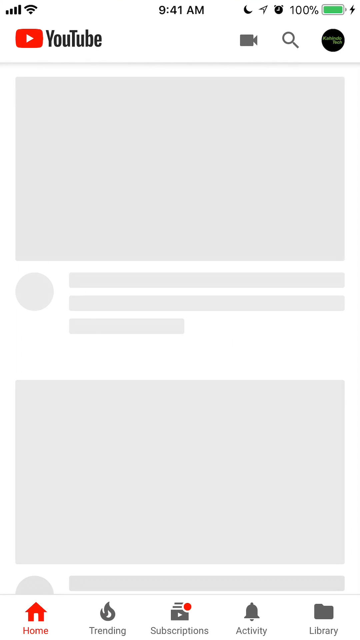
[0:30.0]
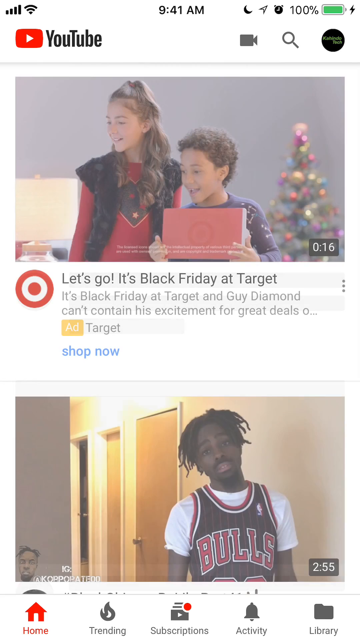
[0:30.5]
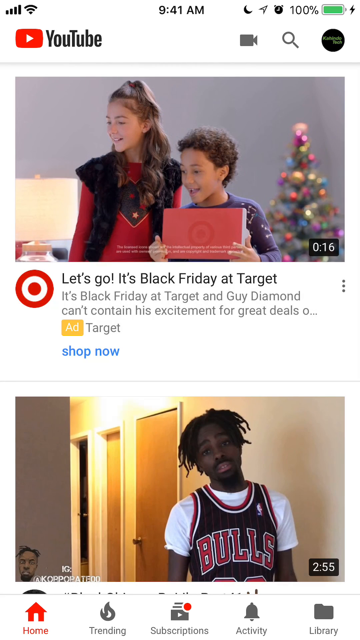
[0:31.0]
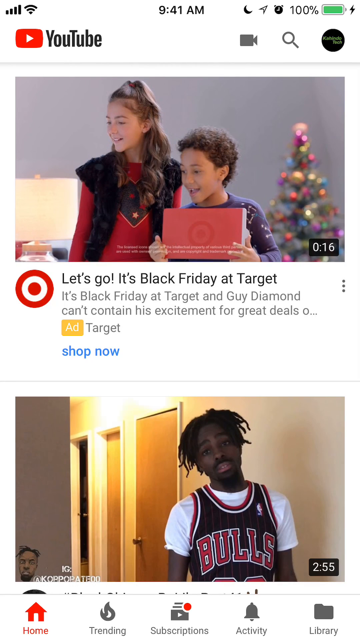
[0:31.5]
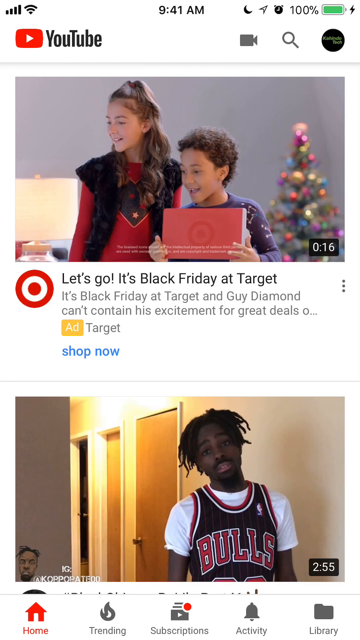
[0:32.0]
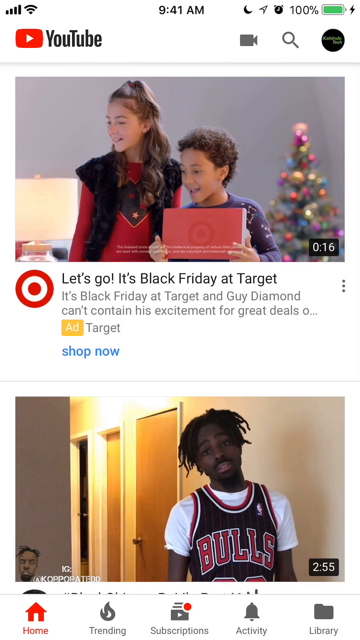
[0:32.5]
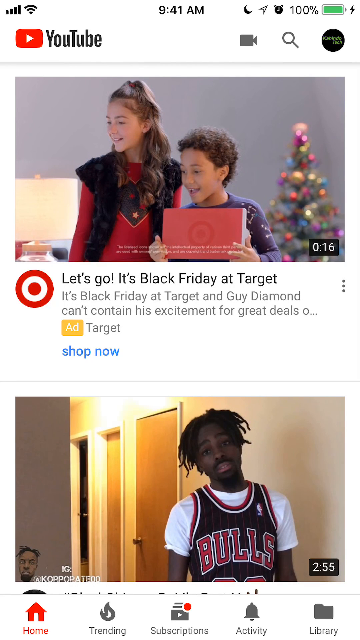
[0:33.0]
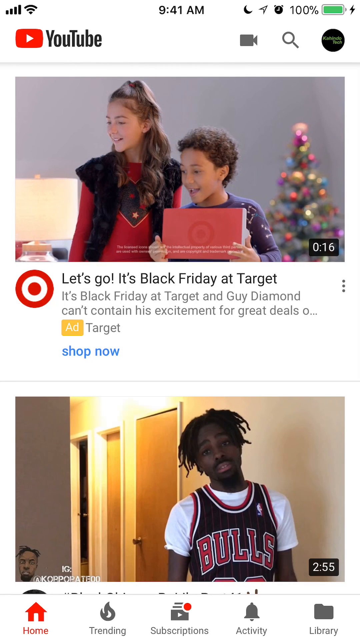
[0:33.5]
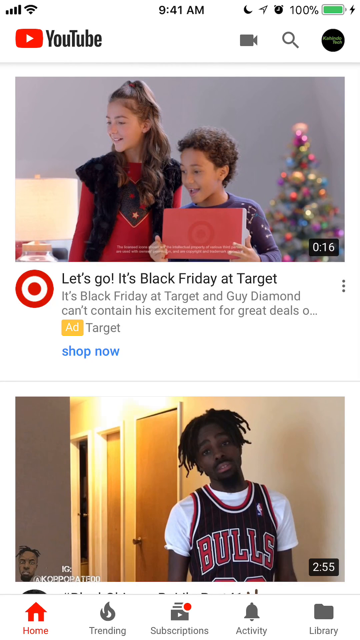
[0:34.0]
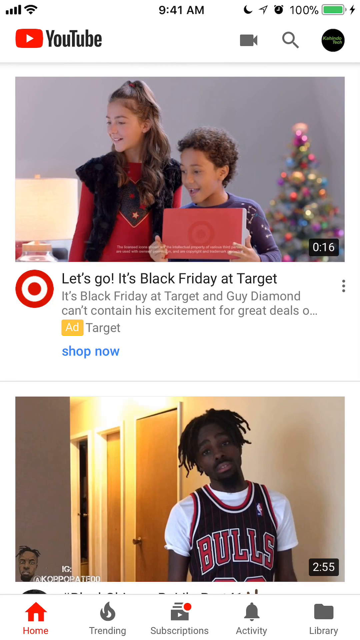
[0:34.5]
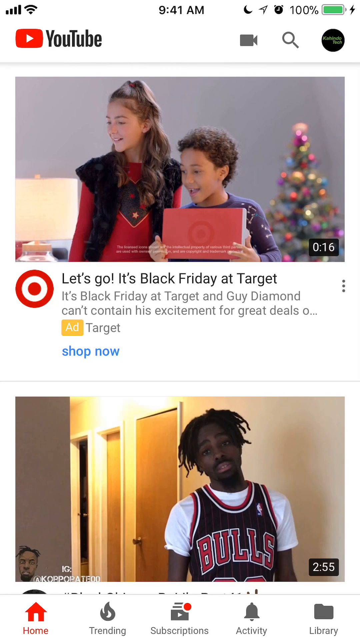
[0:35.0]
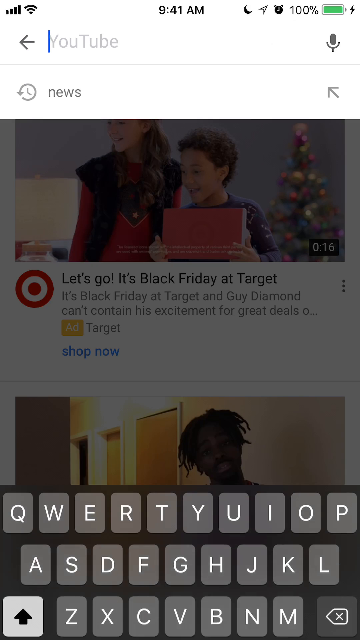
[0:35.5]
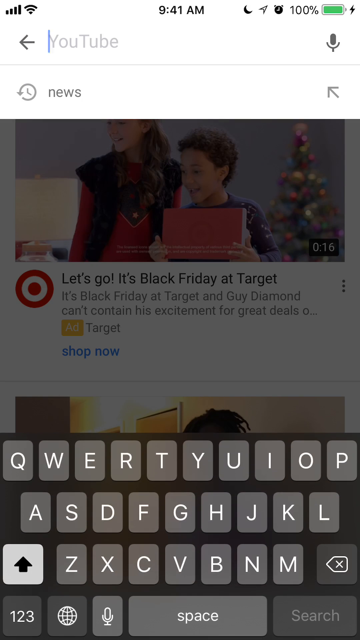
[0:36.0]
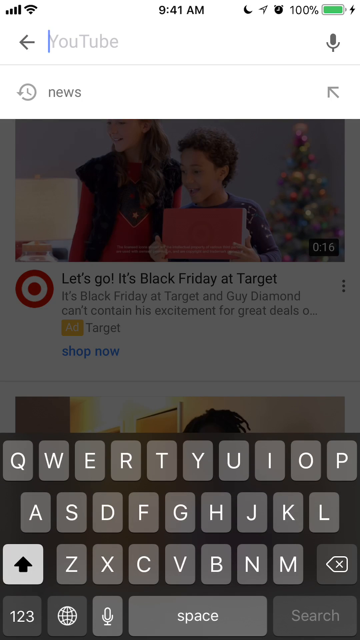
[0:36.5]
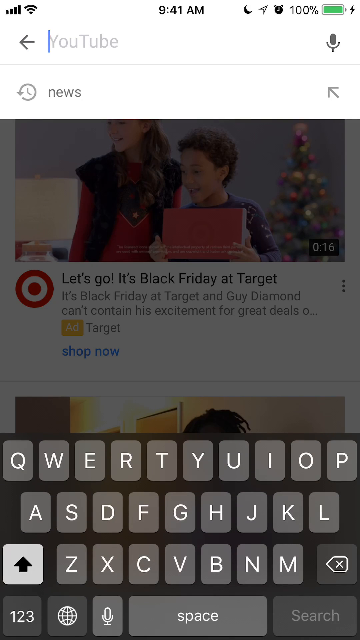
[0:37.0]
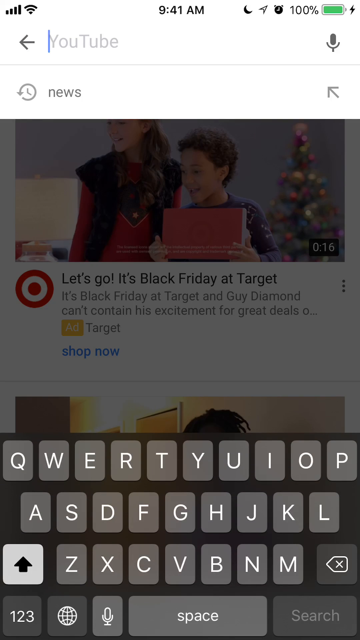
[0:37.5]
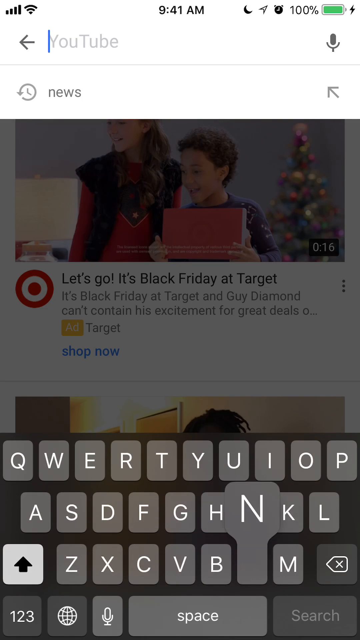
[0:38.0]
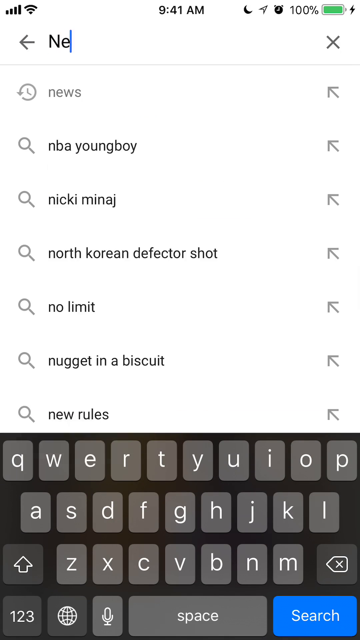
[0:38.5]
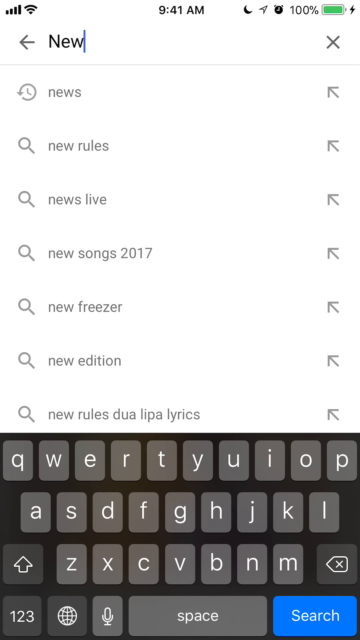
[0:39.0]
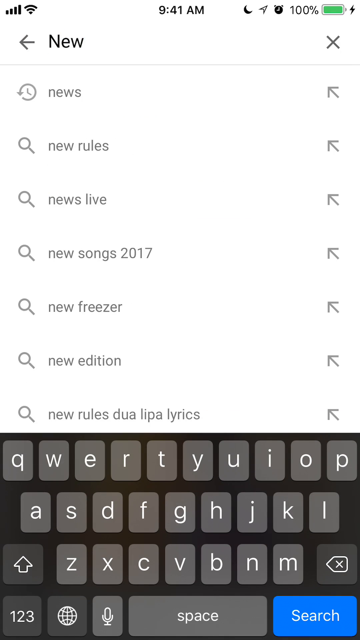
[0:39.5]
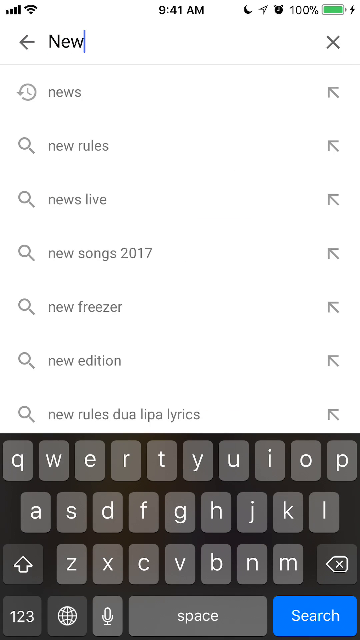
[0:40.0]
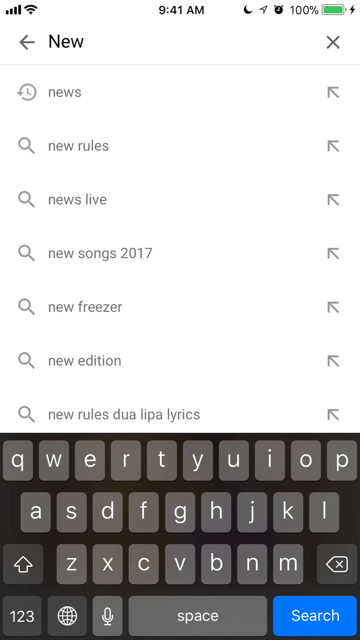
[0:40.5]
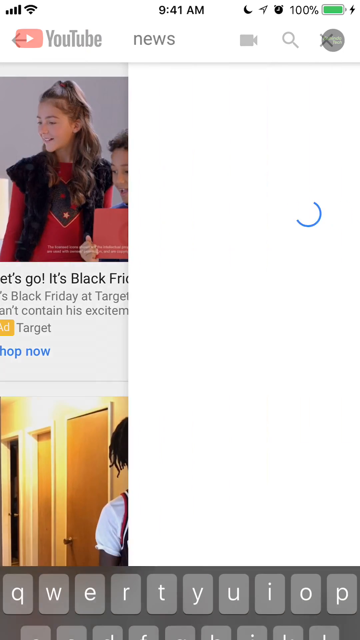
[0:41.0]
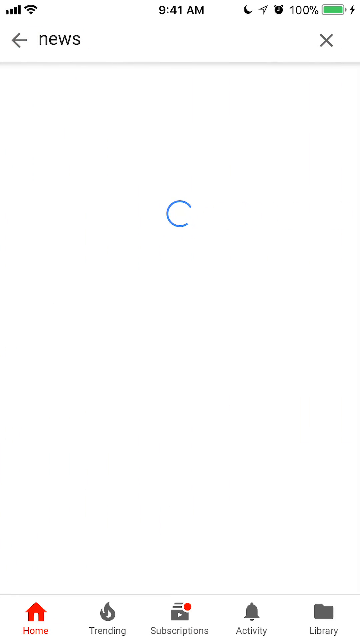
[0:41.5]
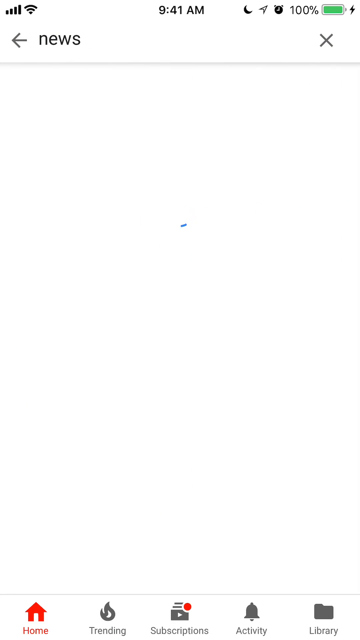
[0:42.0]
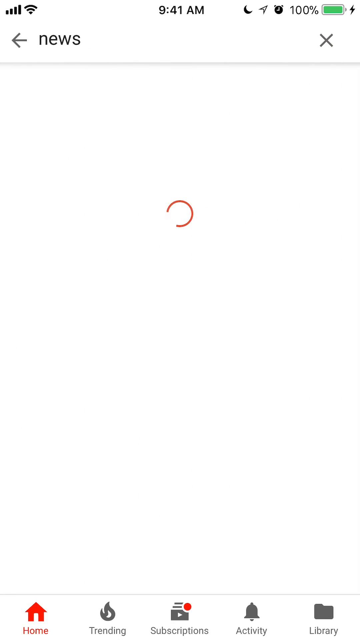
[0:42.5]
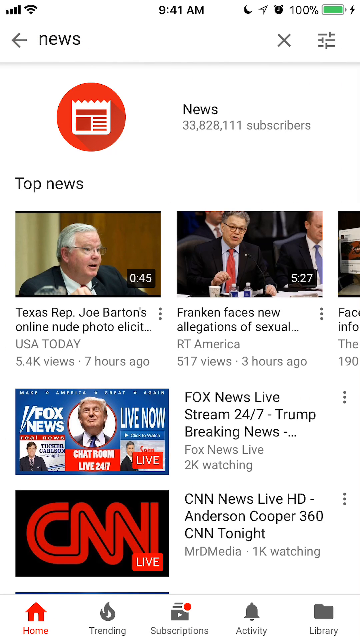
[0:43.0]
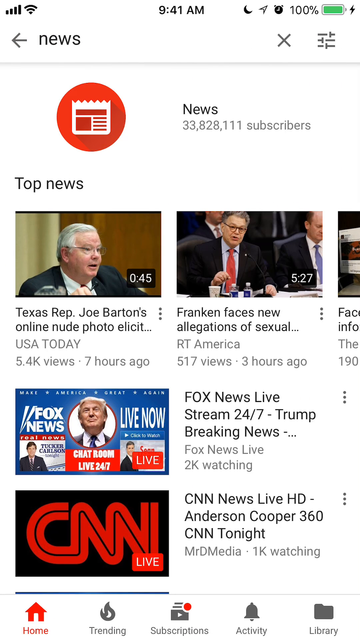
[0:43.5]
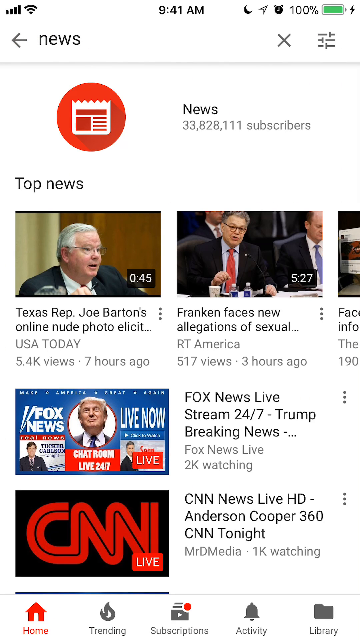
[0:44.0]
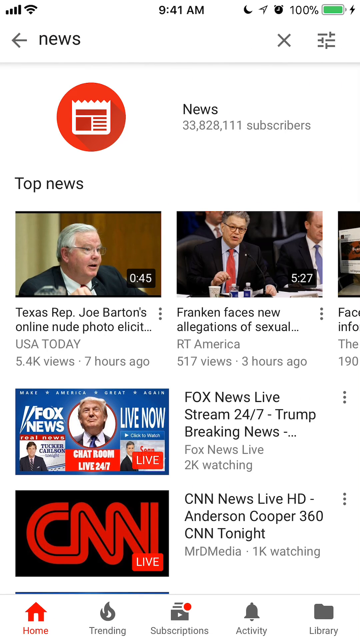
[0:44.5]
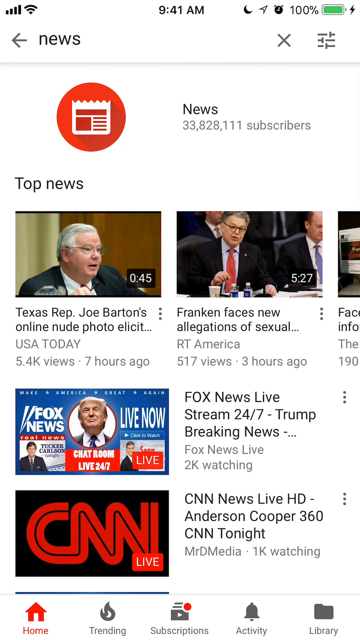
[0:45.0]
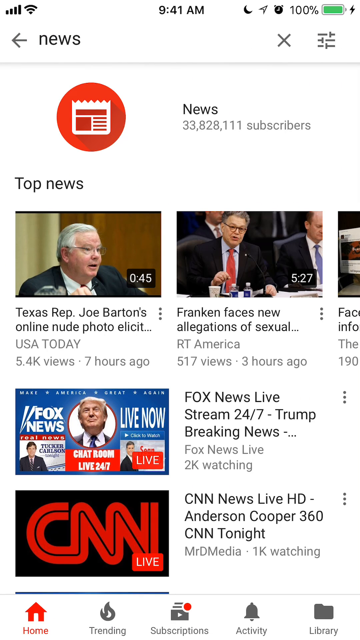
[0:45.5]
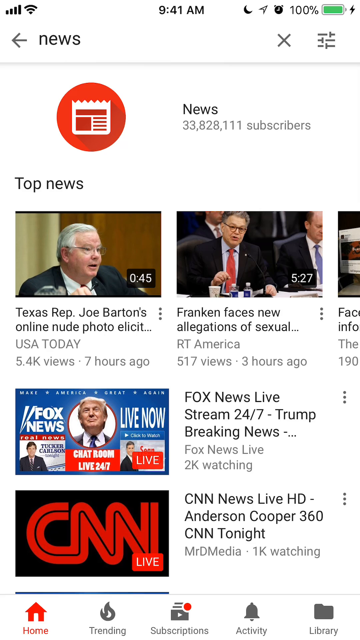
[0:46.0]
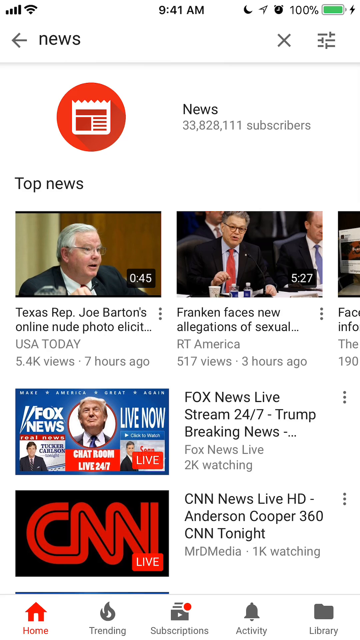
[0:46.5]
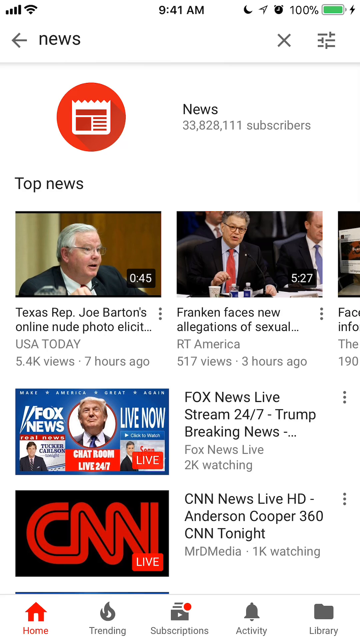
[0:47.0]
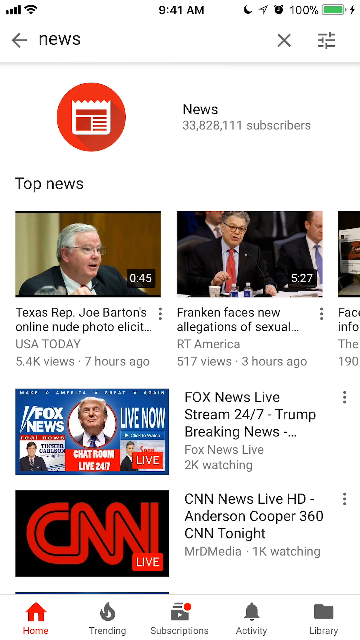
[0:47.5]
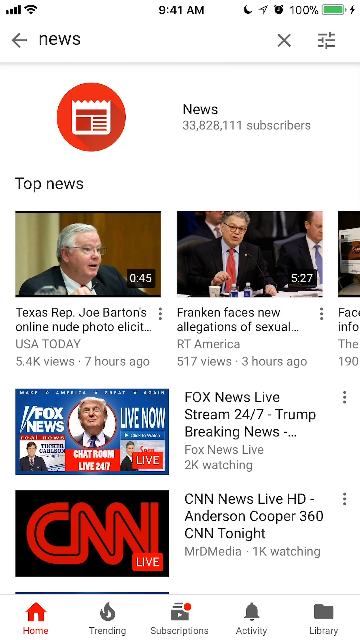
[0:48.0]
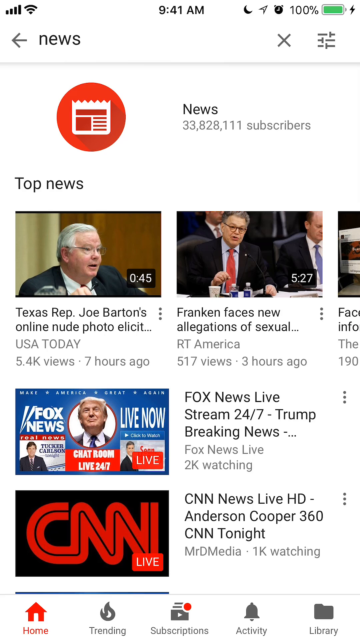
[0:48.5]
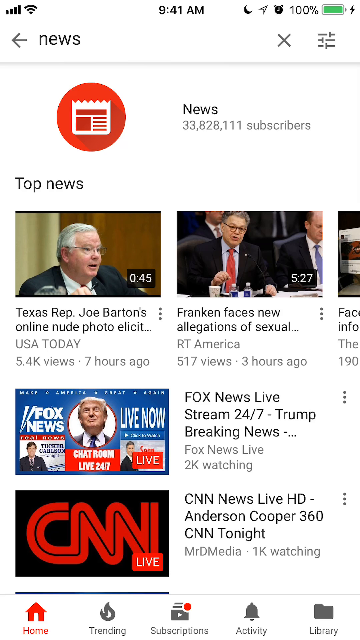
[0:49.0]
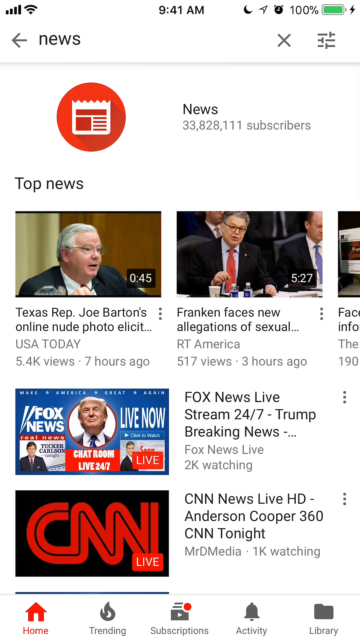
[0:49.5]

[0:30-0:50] The YouTube application is open, apparently on an iPhone, showing two videos. The first looks like an ad that says "let's go, it's Black Friday at Target," with the subtitle "It's Black Friday at Target and Guy Diamond can't contain his excitement for great deals" and an action button reading "shop now." Below it is a video of a guy with what are possibly cornrows, wearing a black Chicago Bulls jersey with white stripes from the Michael Jordan era over a white t-shirt. The iPhone keyboard then appears and the user seems to type "news." At the top of the results is a channel named news with over 33 million followers or subscribers, followed by options such as top news, with videos arranged horizontally, and below that more news arranged vertically. The videos mostly relate to the United States, showing some politicians, the face of Donald Trump, and the CNN logo on the second vertical video.